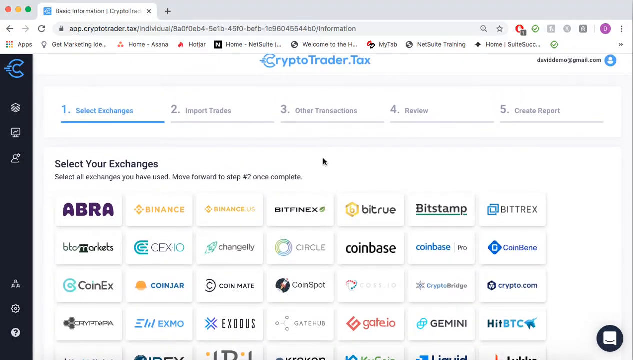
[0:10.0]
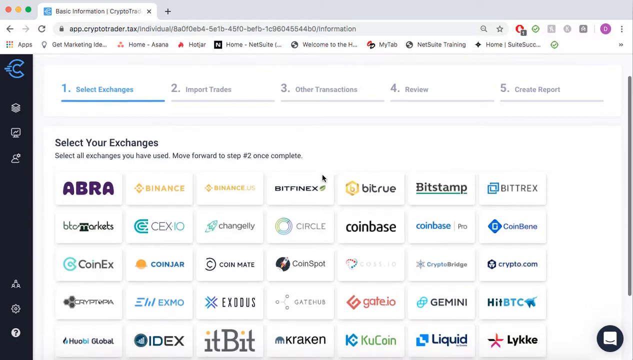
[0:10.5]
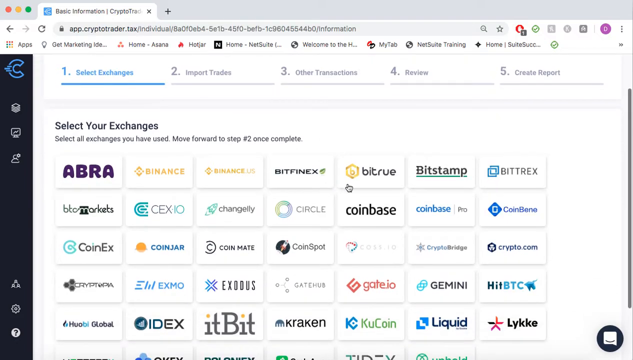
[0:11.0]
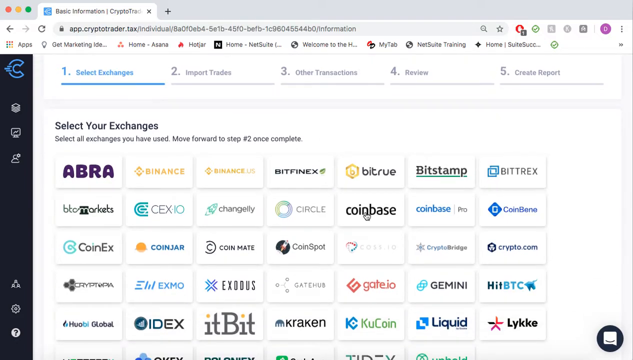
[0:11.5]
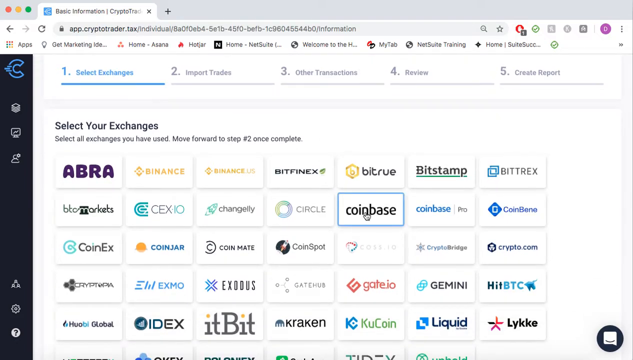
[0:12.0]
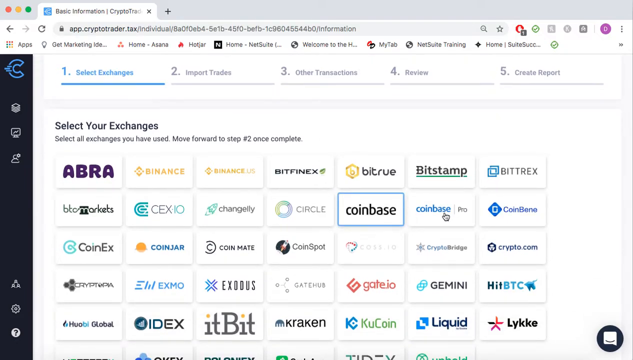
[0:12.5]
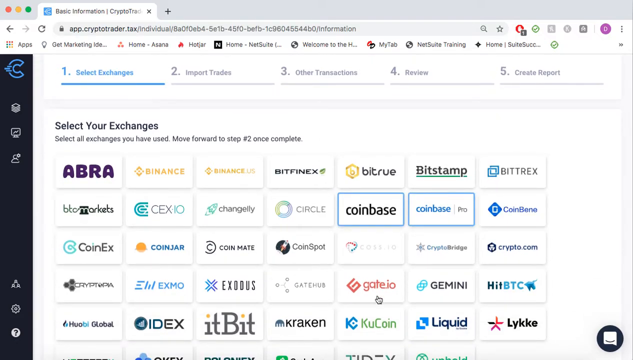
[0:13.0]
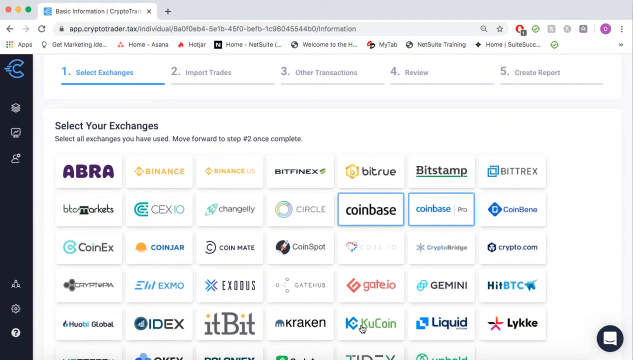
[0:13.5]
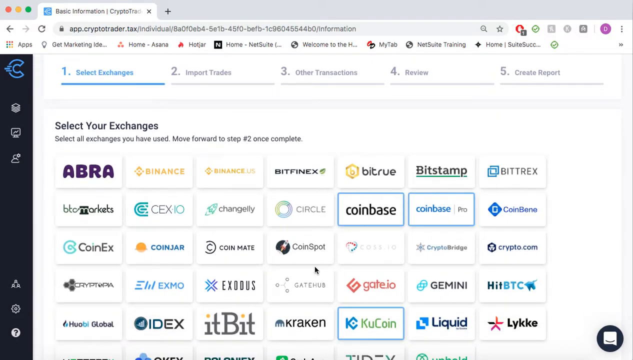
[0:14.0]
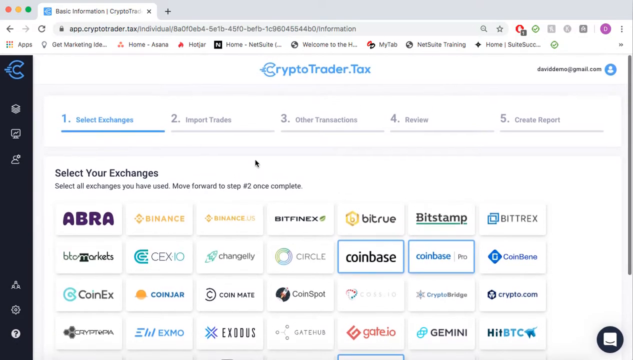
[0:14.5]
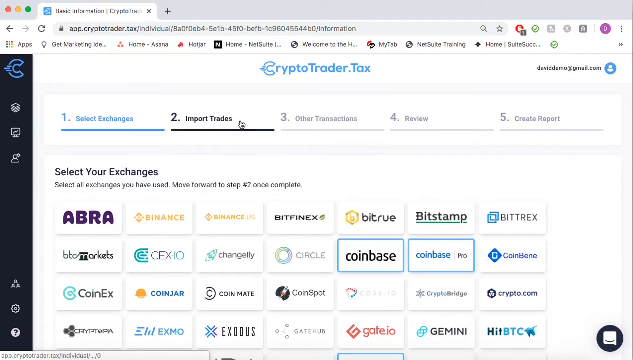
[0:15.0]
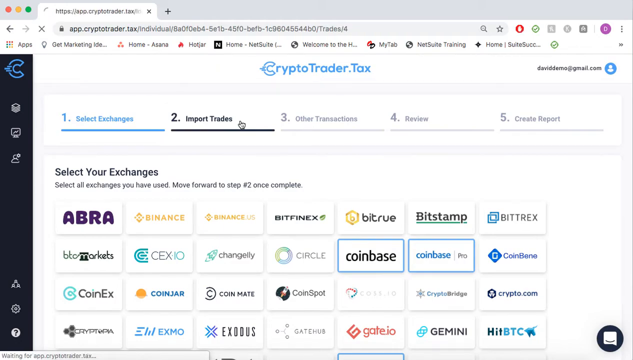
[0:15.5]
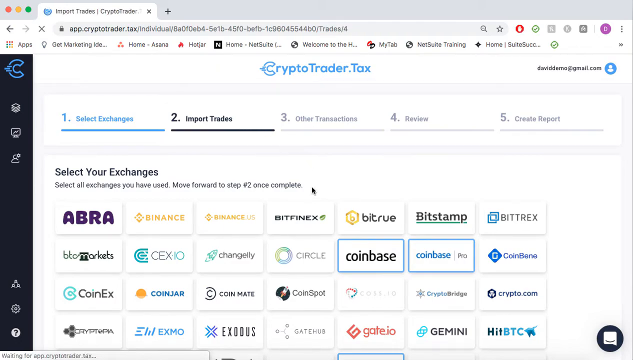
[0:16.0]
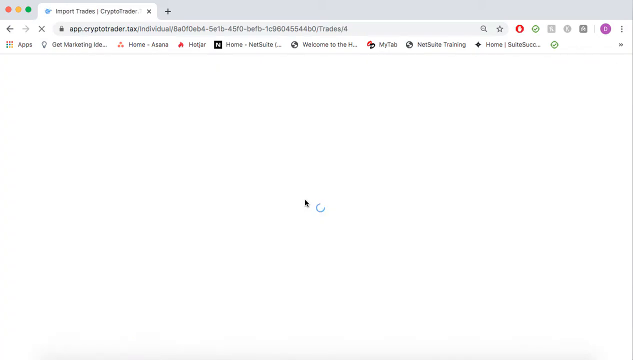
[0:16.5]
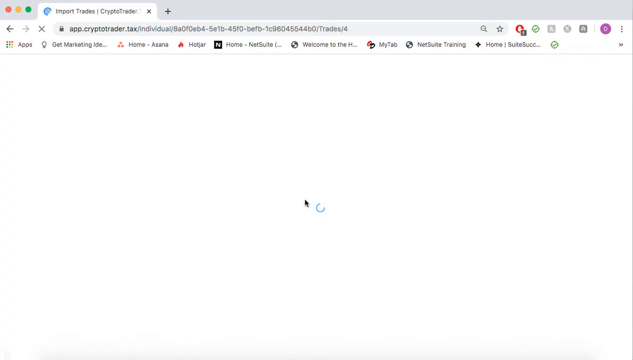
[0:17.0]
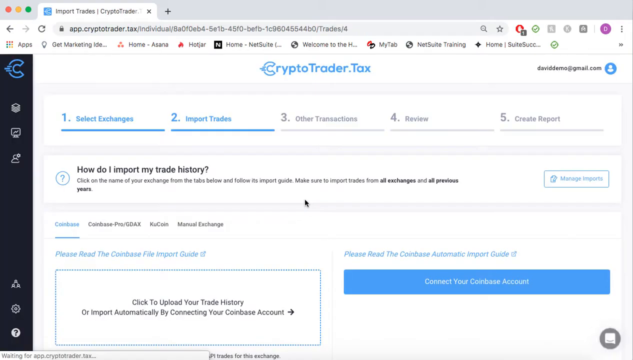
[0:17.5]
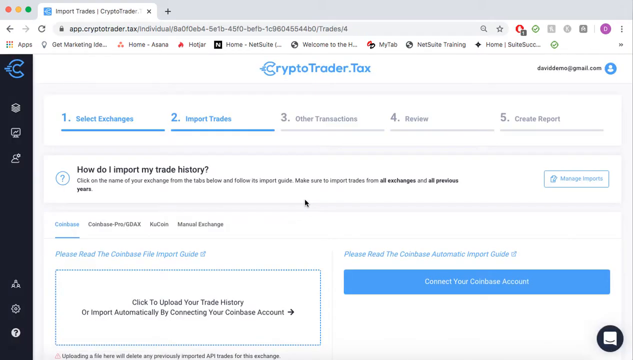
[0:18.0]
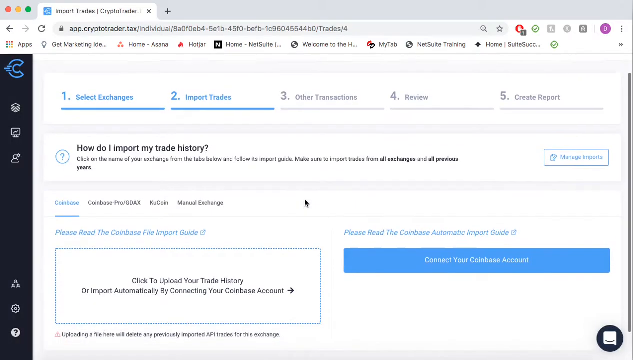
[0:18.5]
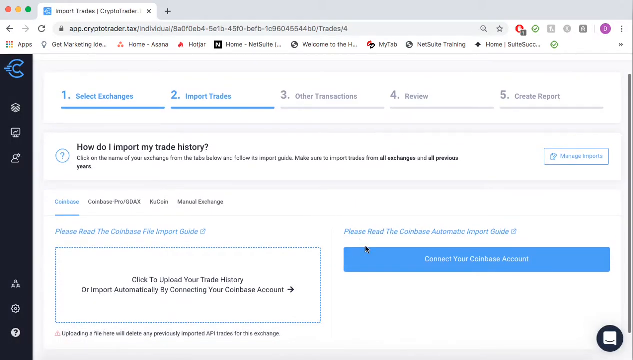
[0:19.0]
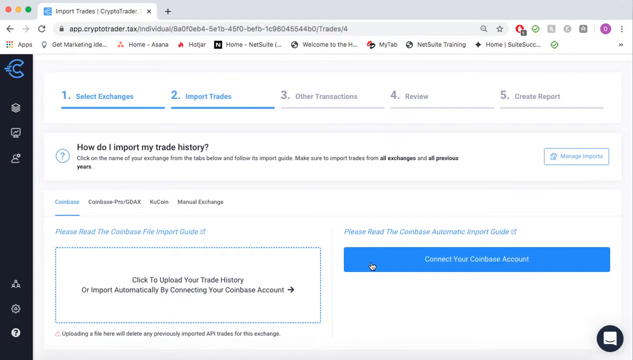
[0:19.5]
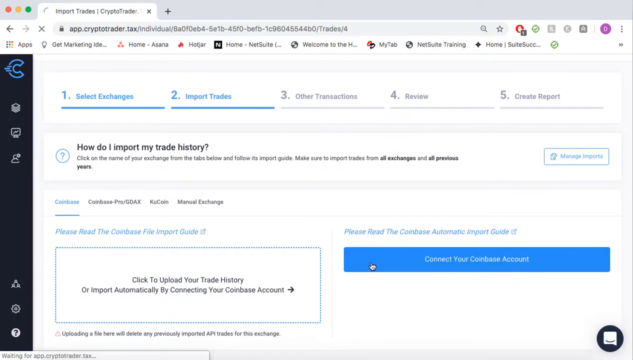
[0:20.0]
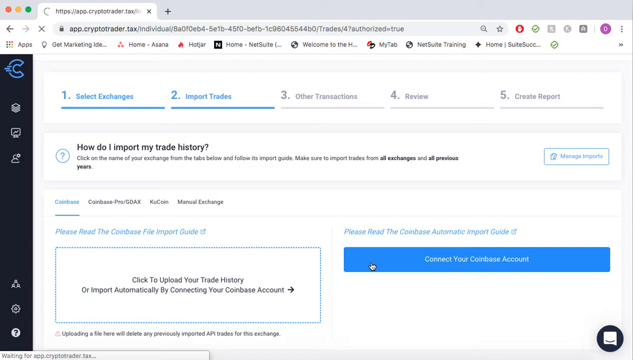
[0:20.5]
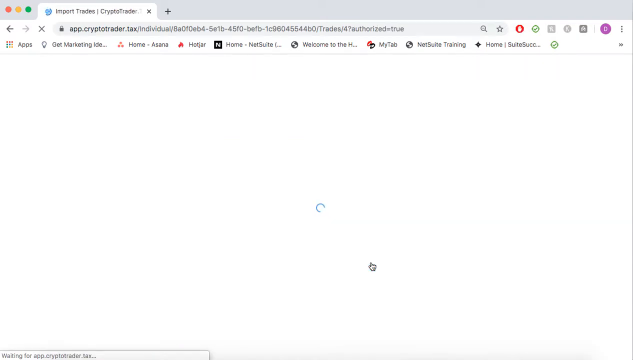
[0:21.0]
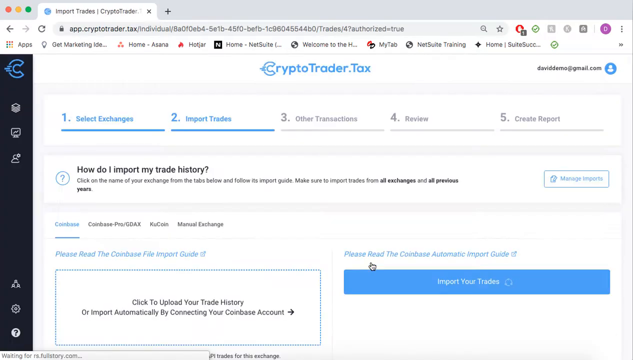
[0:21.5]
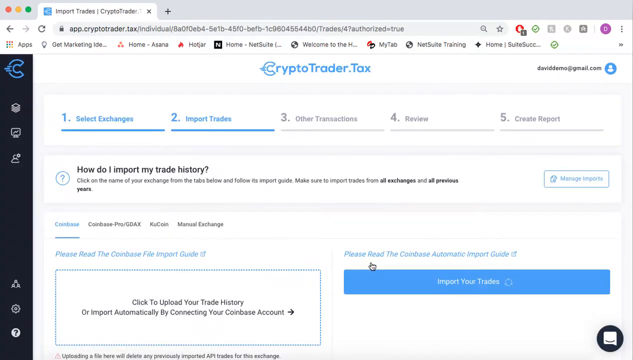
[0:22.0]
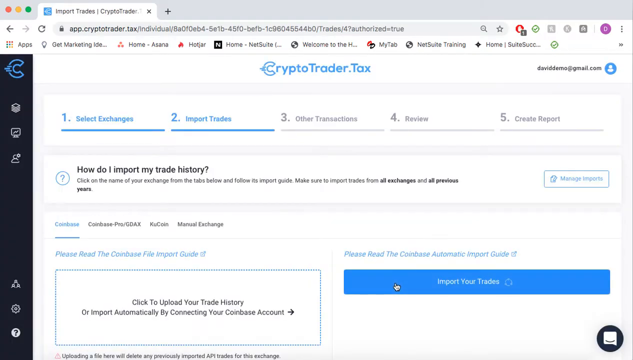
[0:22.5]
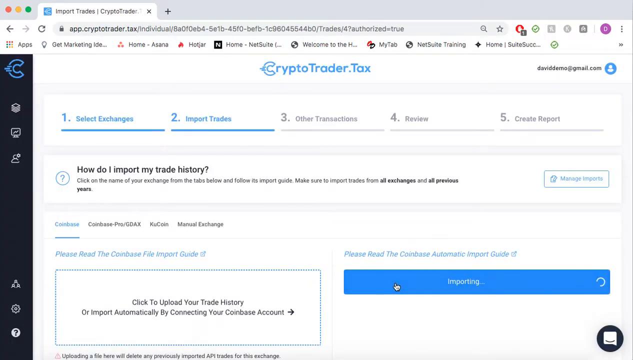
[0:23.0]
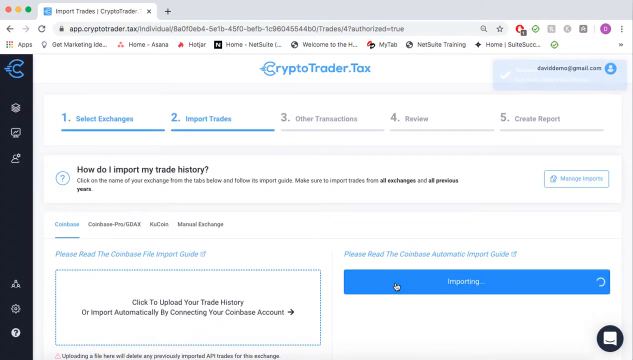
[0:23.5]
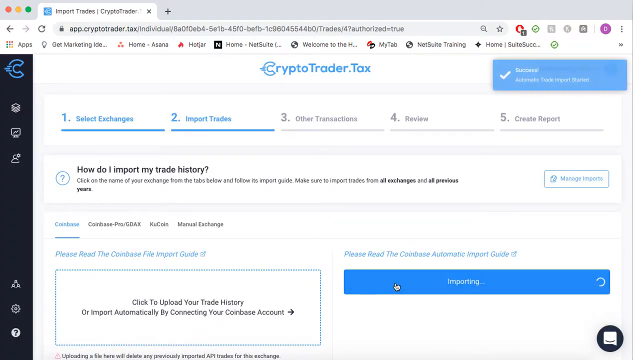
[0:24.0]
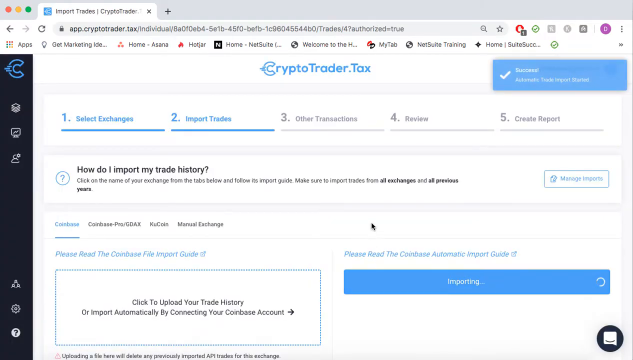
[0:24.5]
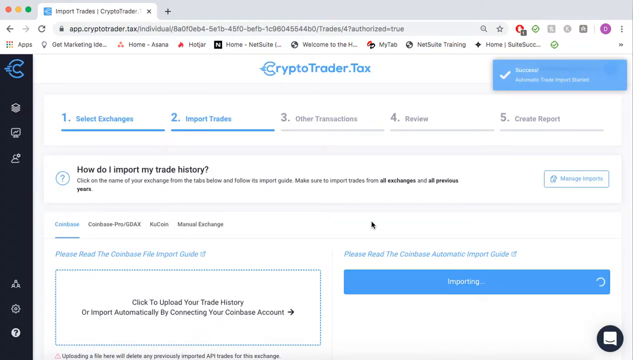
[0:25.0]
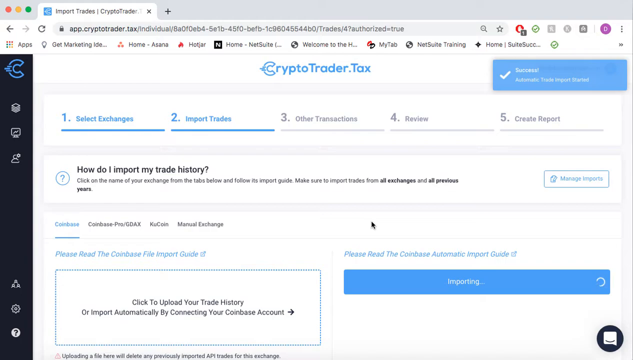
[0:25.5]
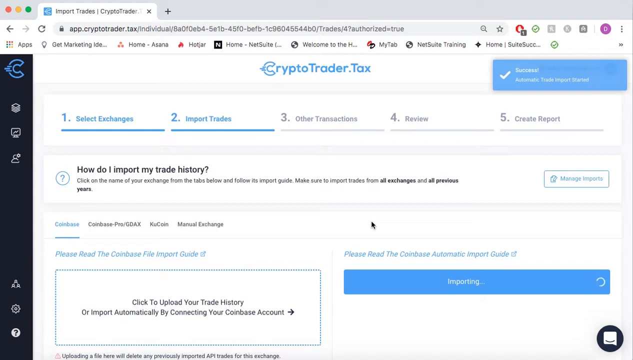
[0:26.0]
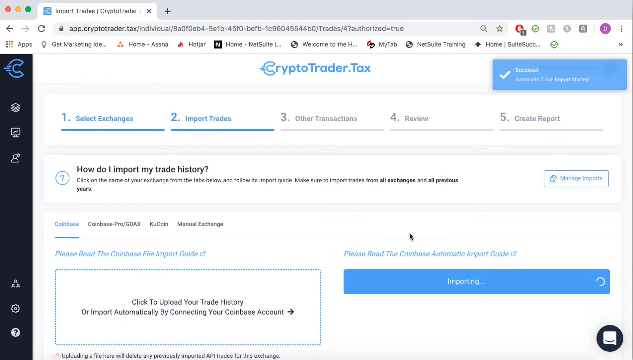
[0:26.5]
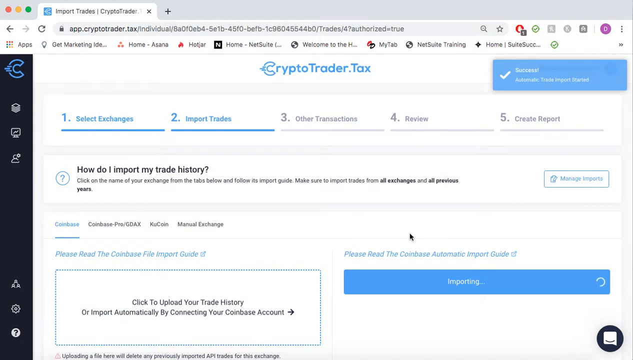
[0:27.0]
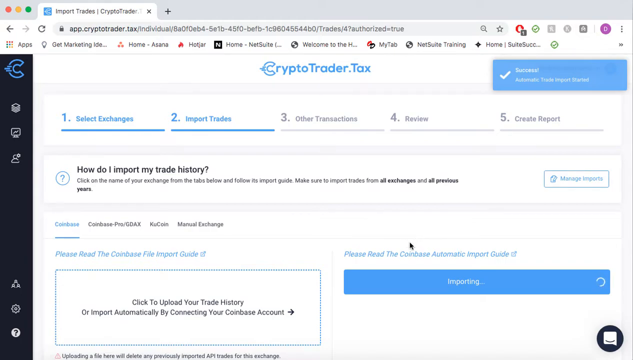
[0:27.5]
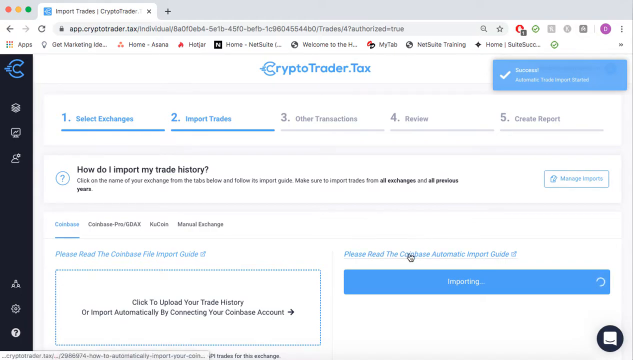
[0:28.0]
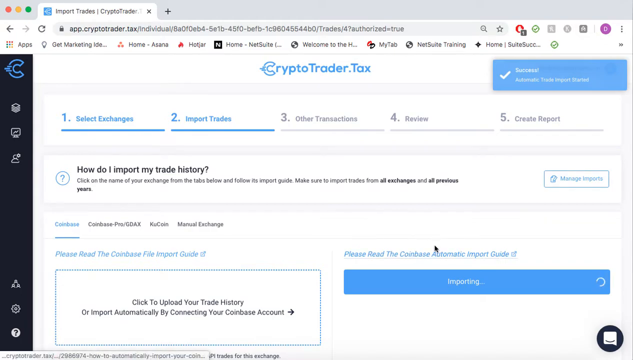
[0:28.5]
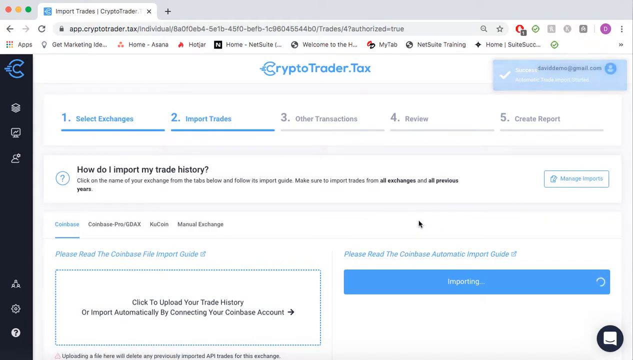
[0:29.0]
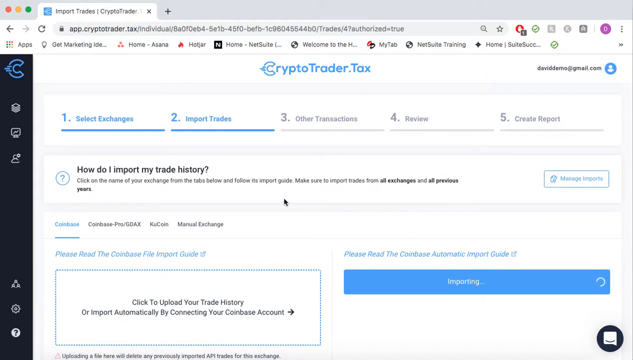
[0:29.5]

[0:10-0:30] The user selects three exchanges: Coinbase, Coinbase Pro and KuCoin. The user then goes to the "Import Trades" section, where text reads "How do I import my trade history? Click on the name of your exchange from the tabs below and follow the import guide." There is a "Manage Imports" button. Below is a section divided into four: "Coinbase", "Coinbase Pro", "KuCoin" and "Manual Exchange". Coinbase is selected first, and it has two columns: one says "Please read the Coinbase File Import Guide", and the next says "Please read the Coinbase Automatic Import Guide" and has a blue button that says "Connect your Coinbase Account". The user clicks that button and then presses the "Import" button.